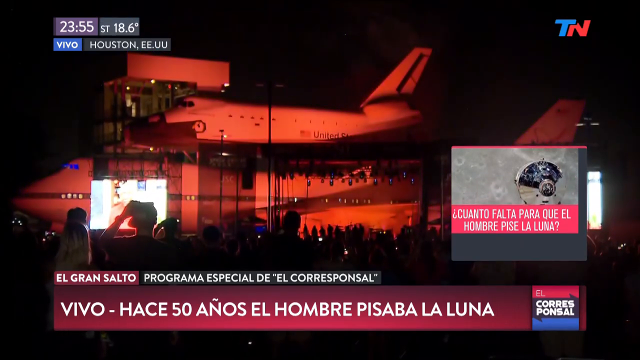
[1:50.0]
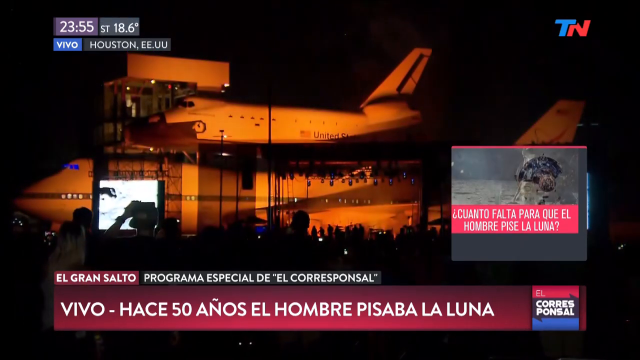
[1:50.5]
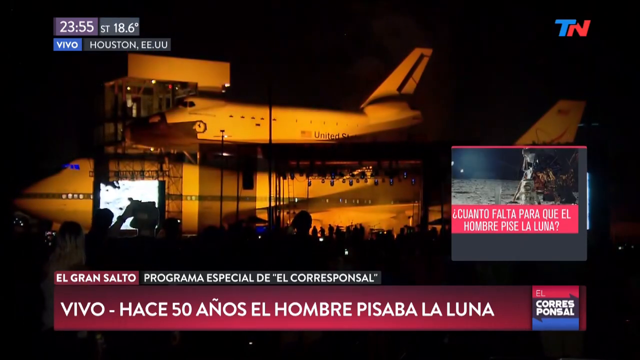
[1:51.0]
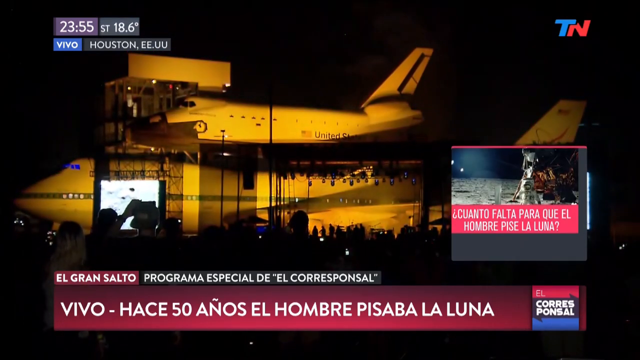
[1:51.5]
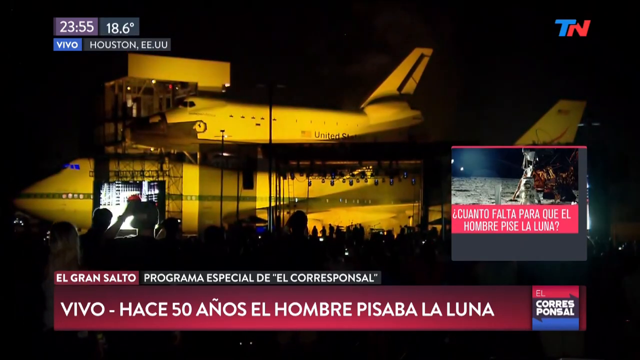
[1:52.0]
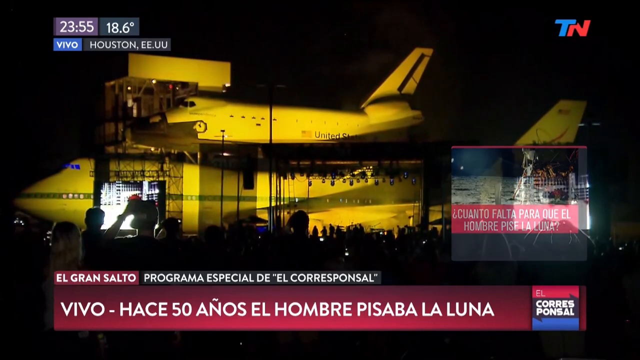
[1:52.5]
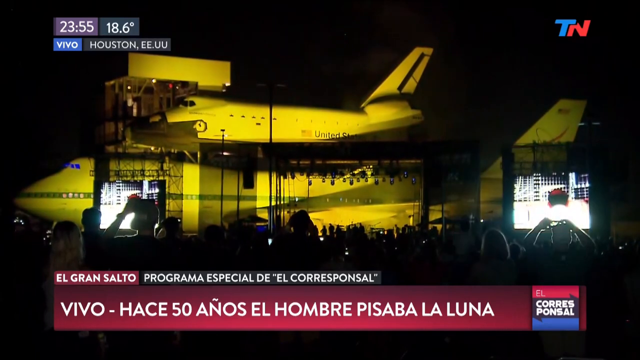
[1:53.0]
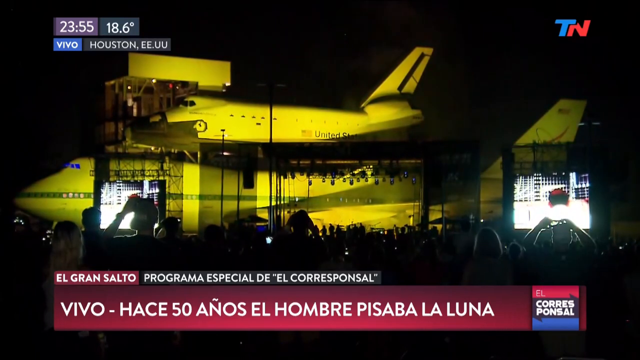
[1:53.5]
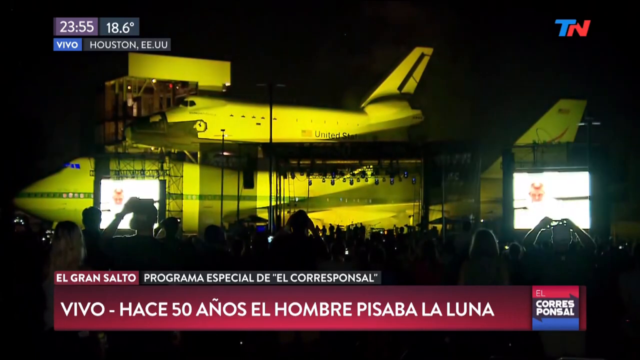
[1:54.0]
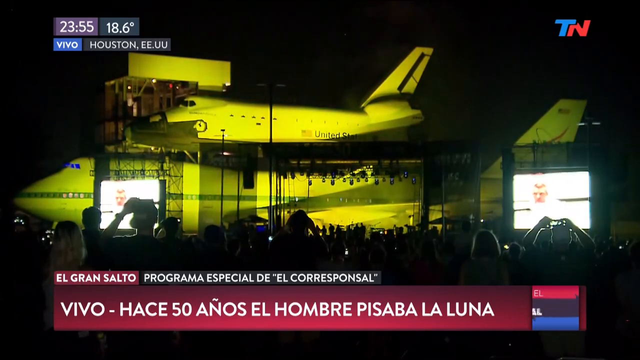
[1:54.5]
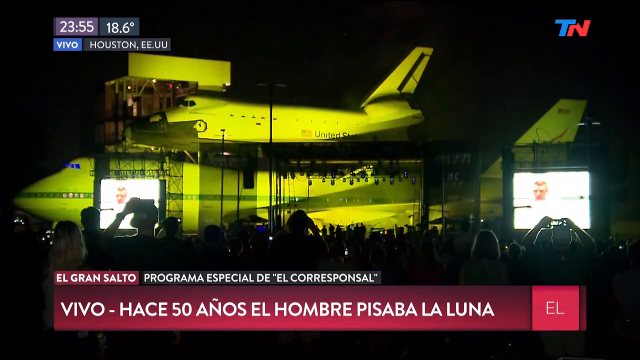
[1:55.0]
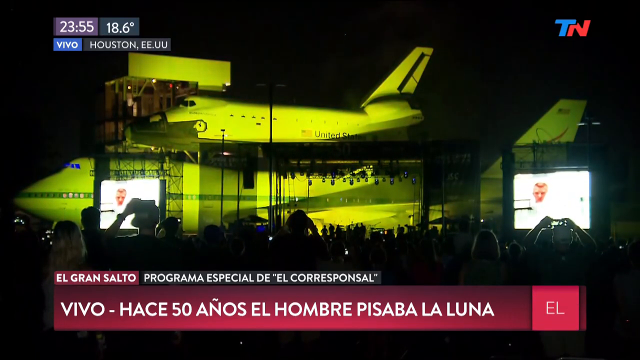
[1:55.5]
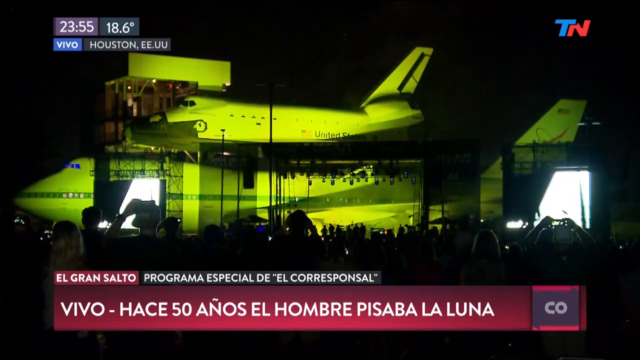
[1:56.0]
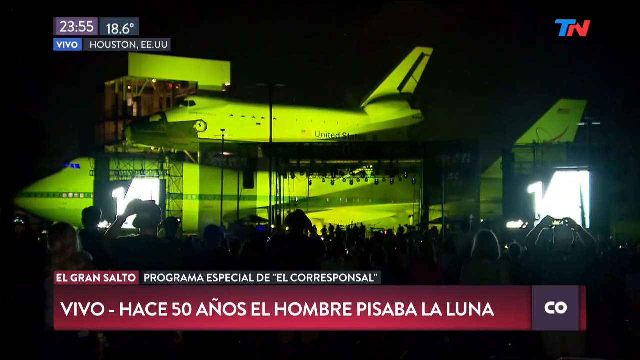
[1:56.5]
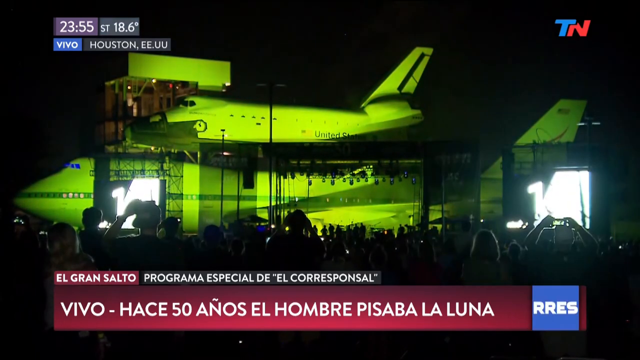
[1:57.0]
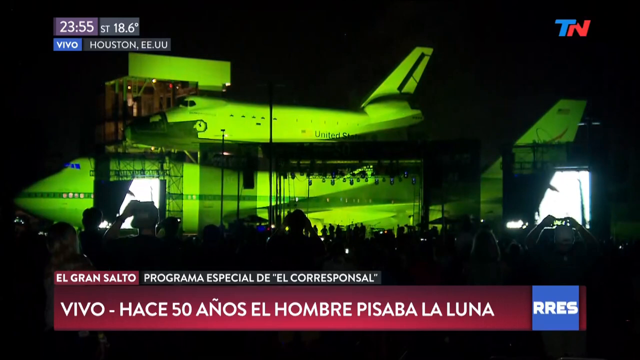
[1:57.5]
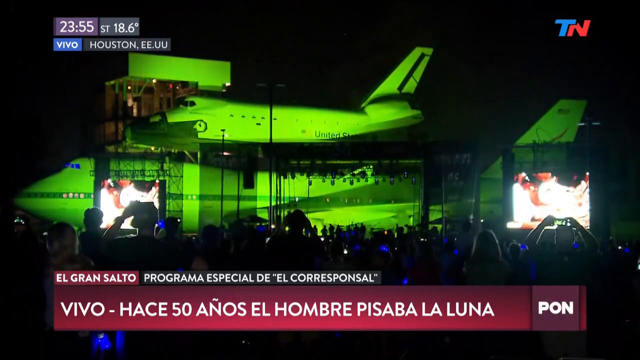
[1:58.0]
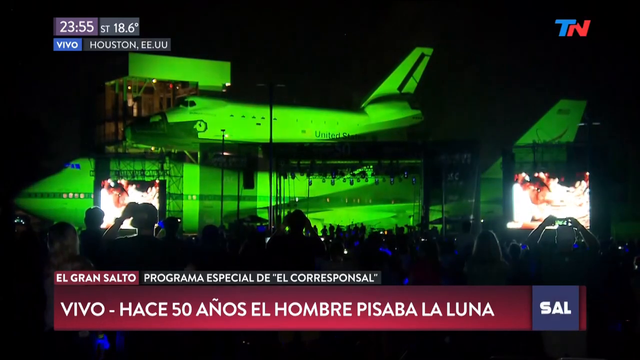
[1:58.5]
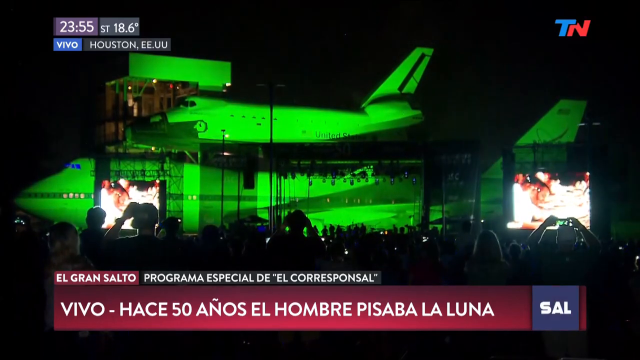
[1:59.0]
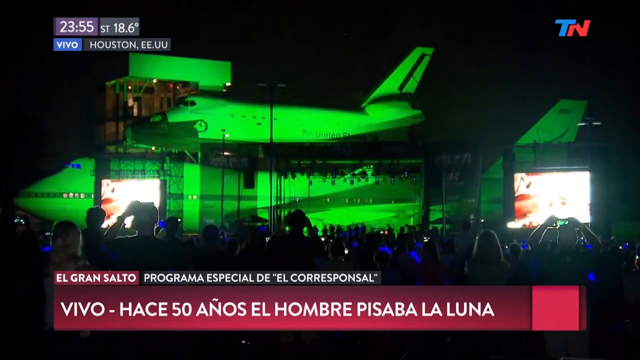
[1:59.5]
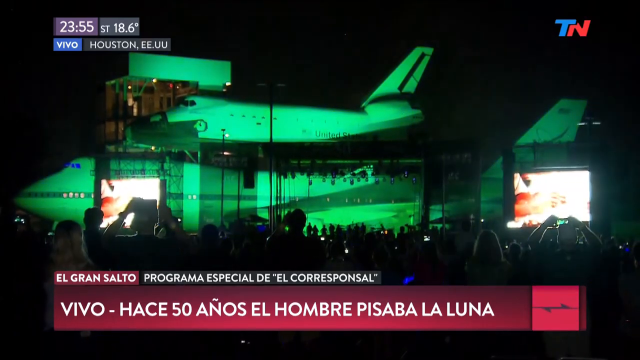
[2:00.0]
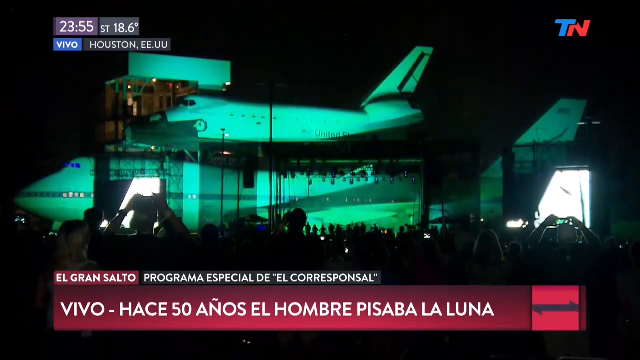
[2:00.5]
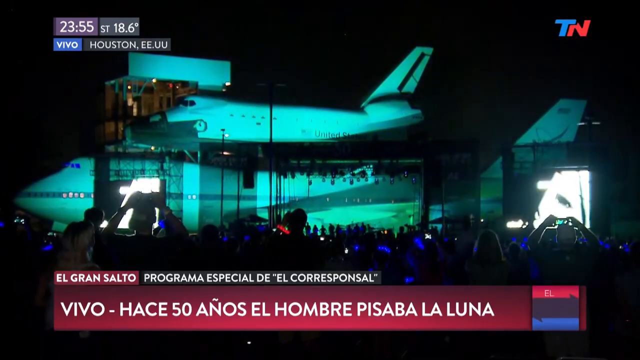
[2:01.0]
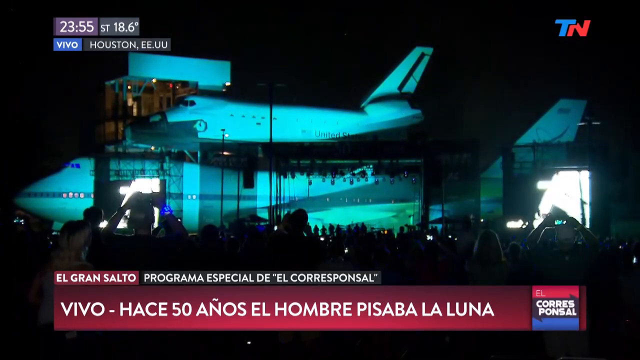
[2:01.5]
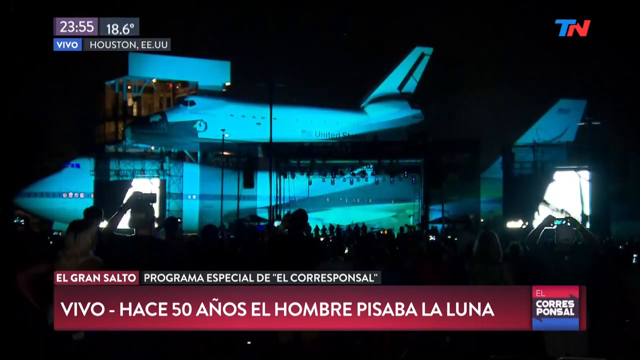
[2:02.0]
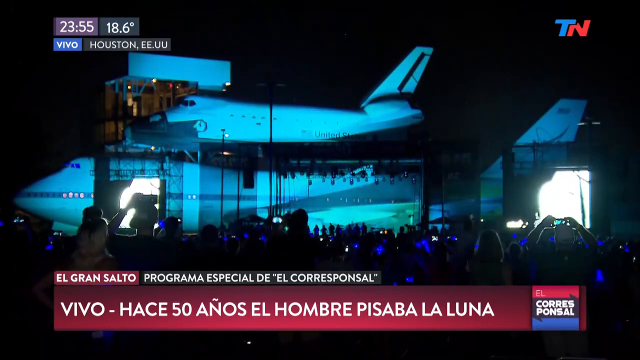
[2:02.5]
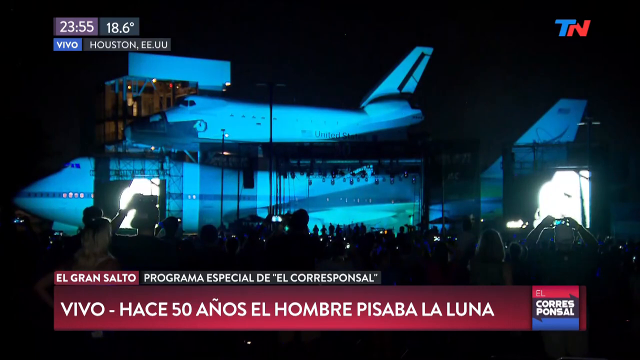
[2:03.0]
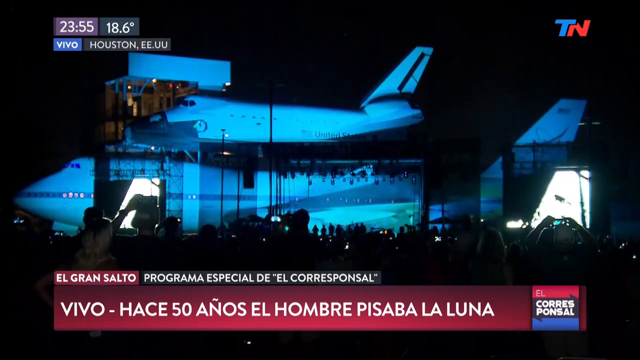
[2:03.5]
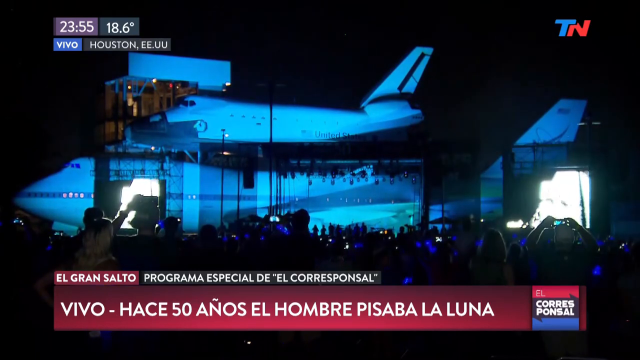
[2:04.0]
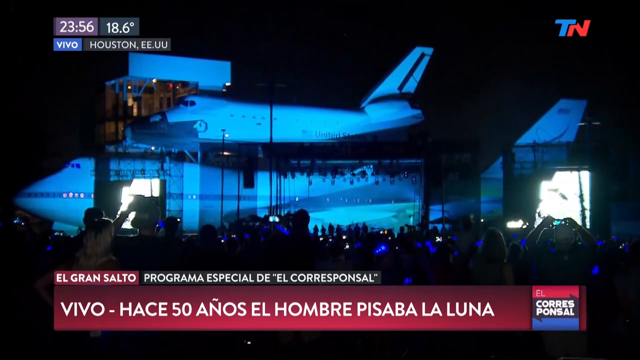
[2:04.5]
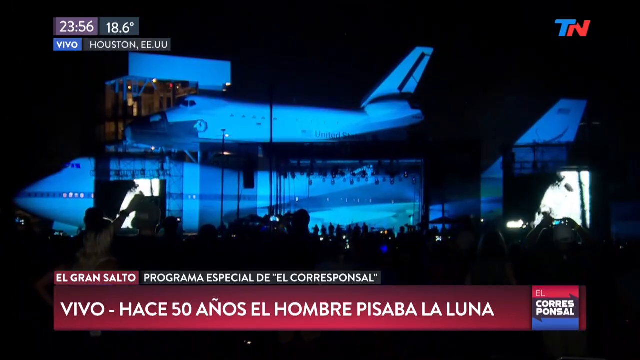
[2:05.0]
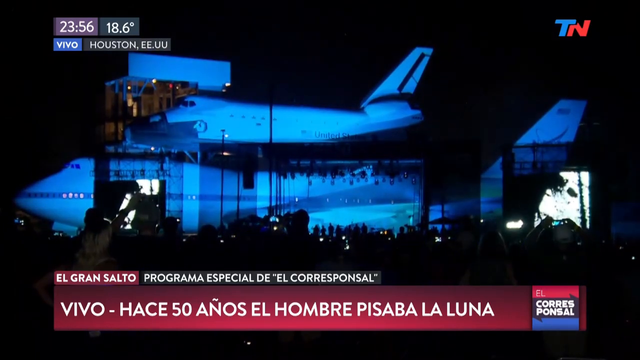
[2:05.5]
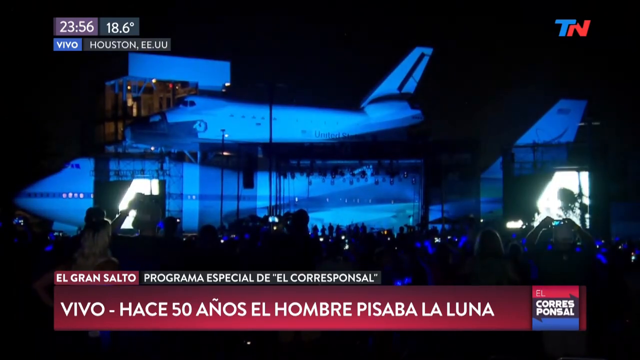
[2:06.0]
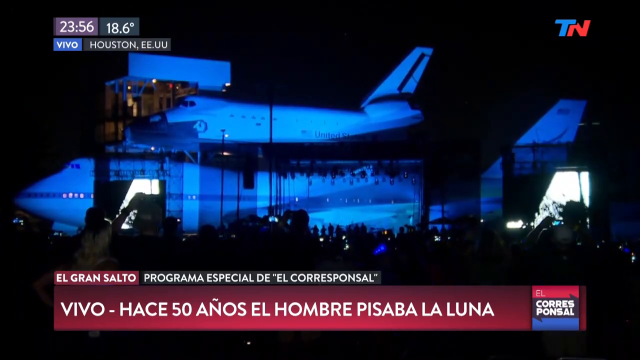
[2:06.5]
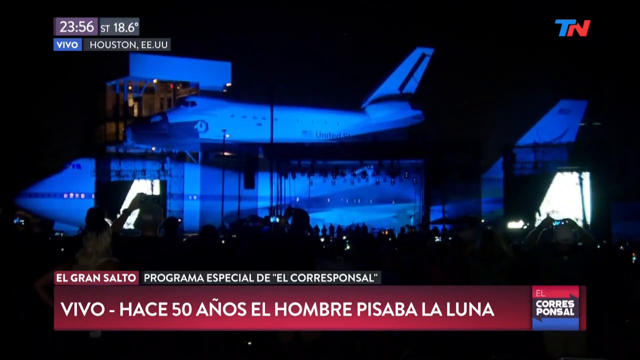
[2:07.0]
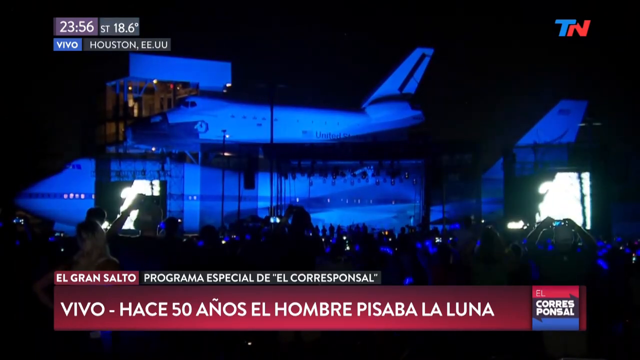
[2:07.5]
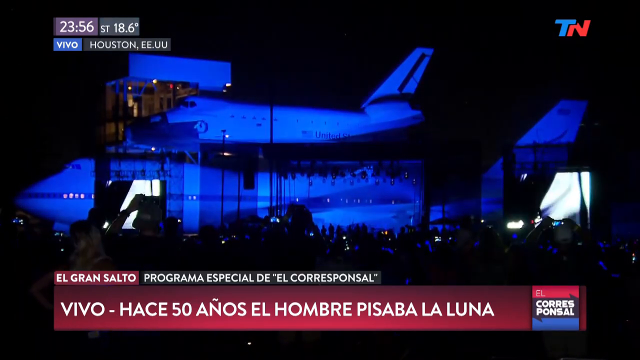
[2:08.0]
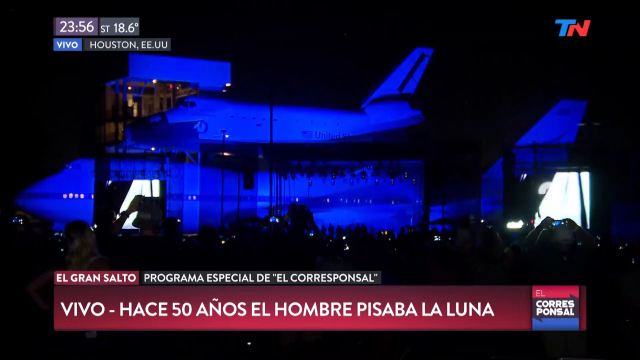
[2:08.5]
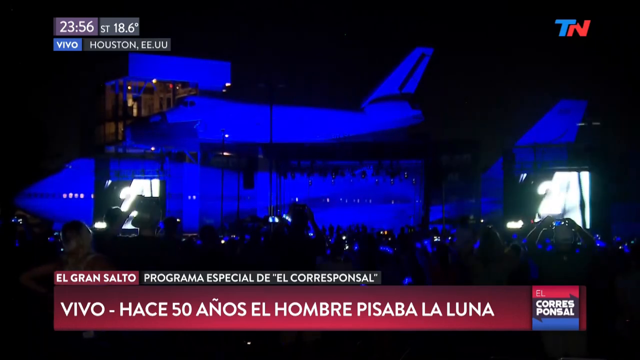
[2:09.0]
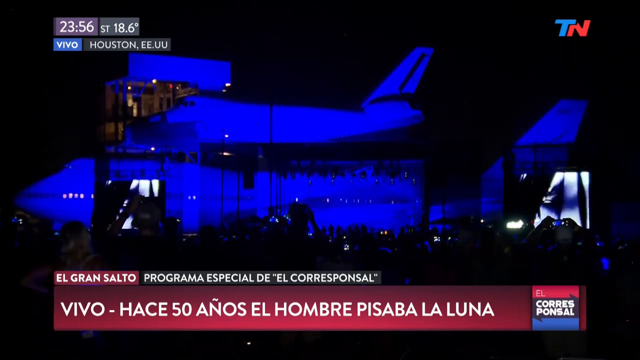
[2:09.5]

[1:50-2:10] The timer appears to run out, and then a timer on the screen counts down 5, 4, 3, 2, 1. Nothing visible happens as the timer runs out, while the spectators hold their cameras out.